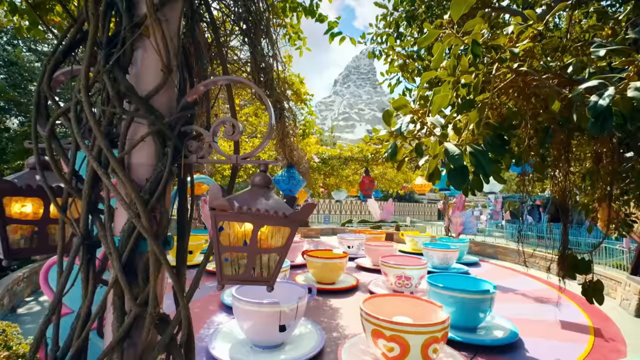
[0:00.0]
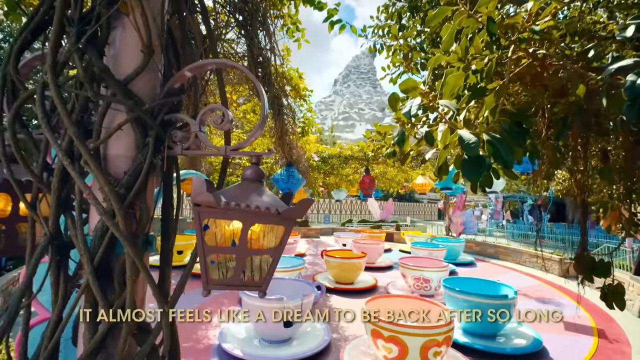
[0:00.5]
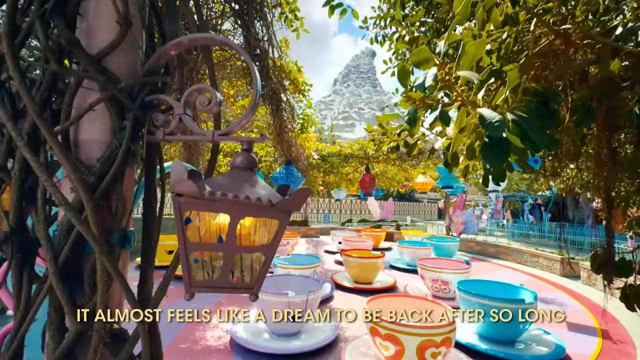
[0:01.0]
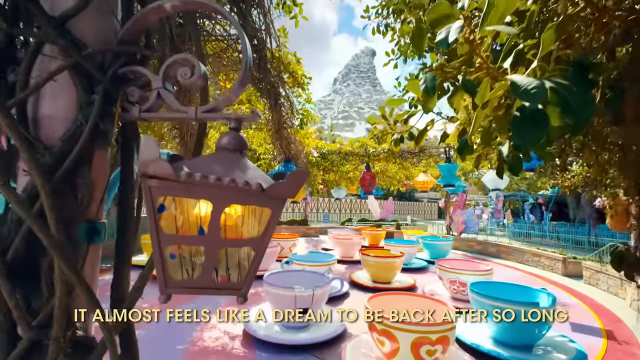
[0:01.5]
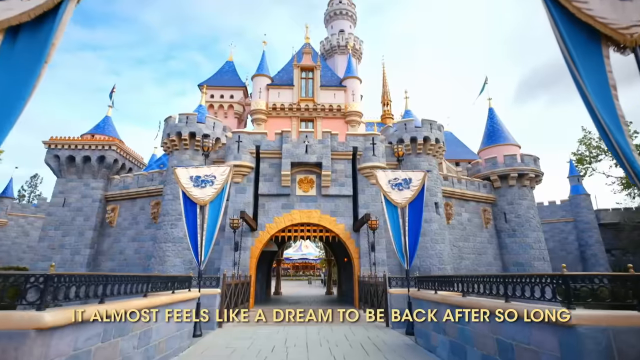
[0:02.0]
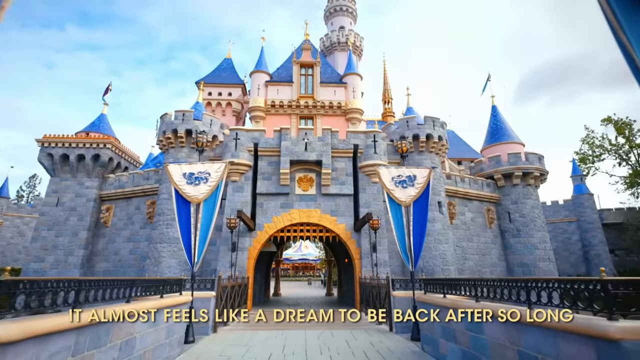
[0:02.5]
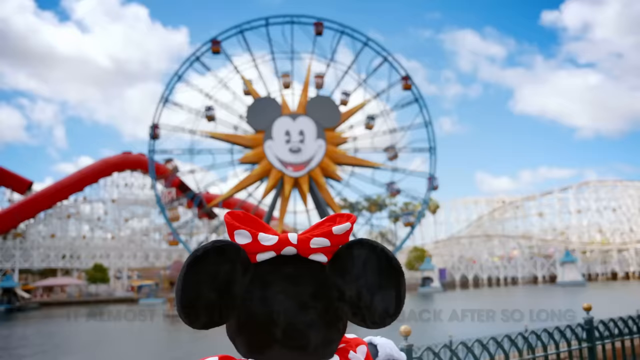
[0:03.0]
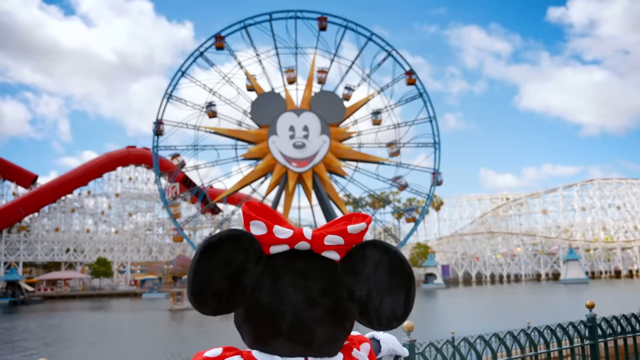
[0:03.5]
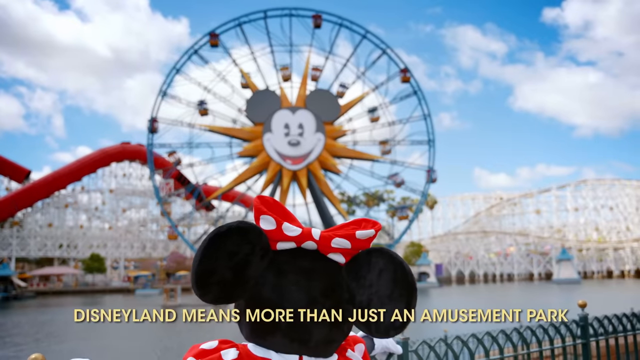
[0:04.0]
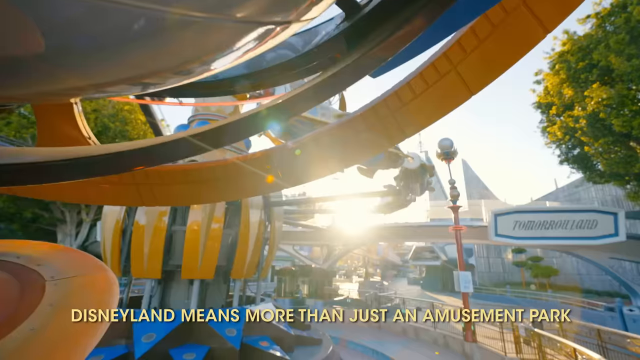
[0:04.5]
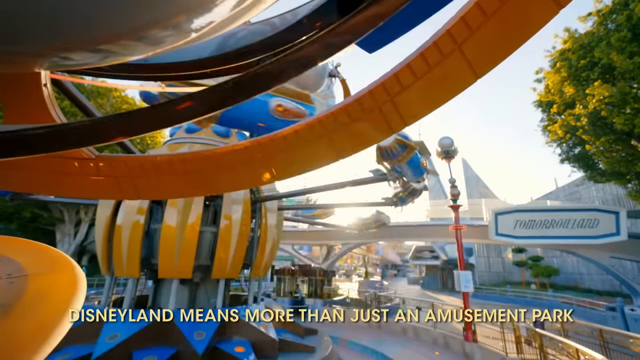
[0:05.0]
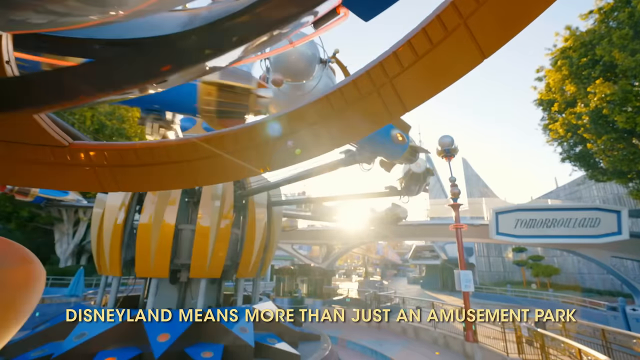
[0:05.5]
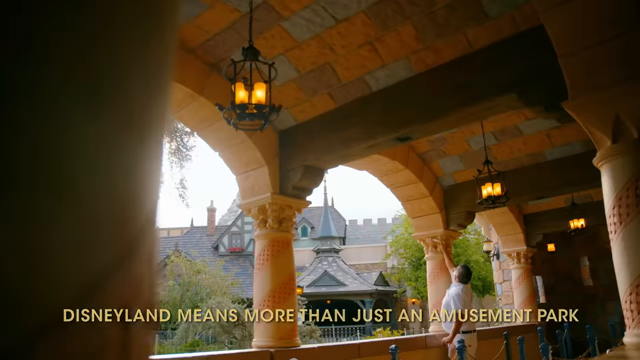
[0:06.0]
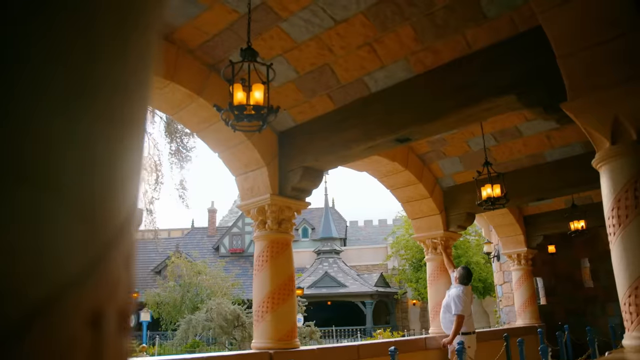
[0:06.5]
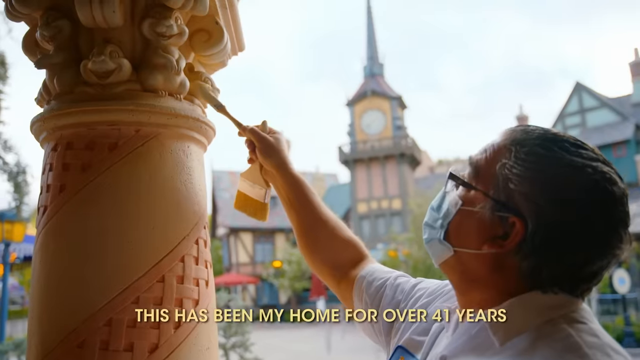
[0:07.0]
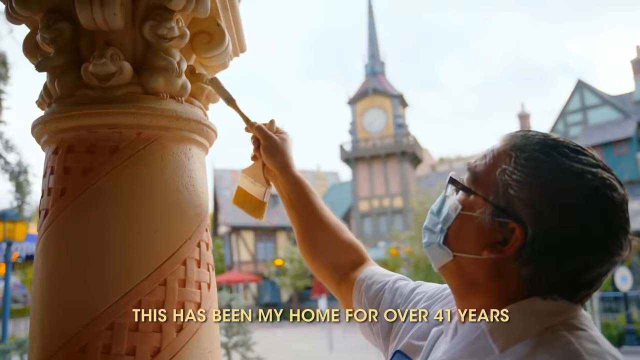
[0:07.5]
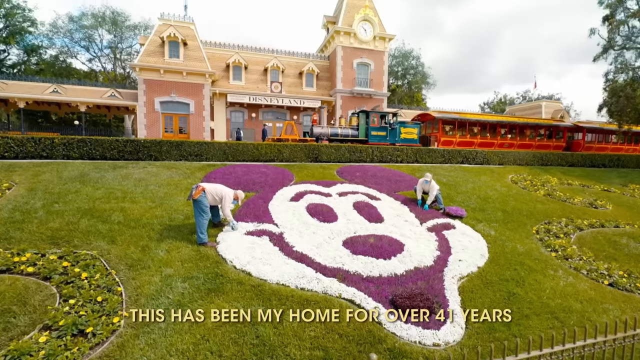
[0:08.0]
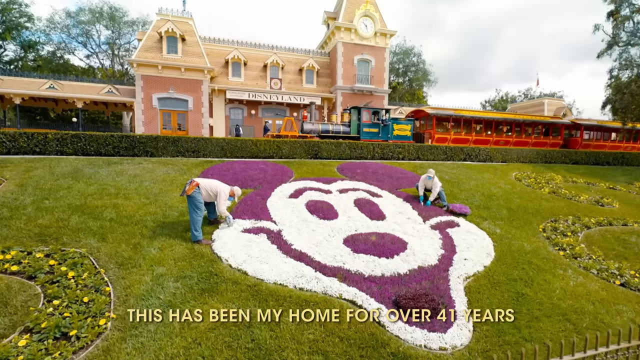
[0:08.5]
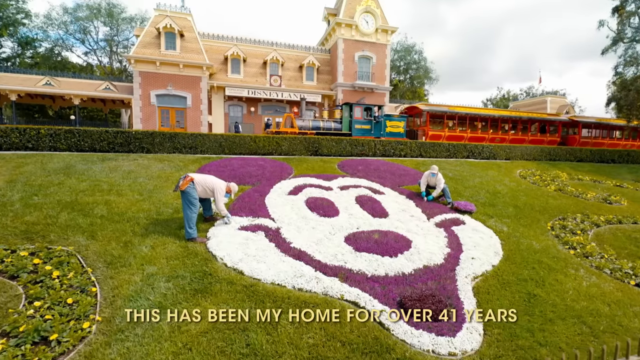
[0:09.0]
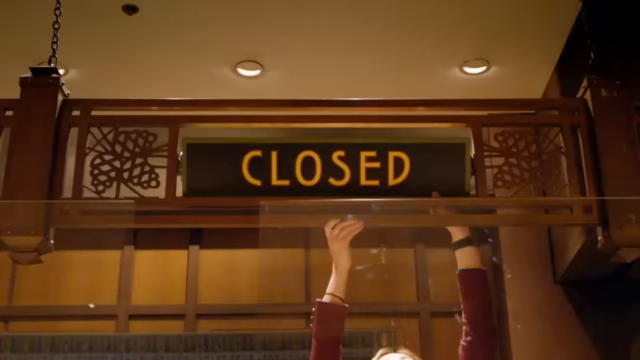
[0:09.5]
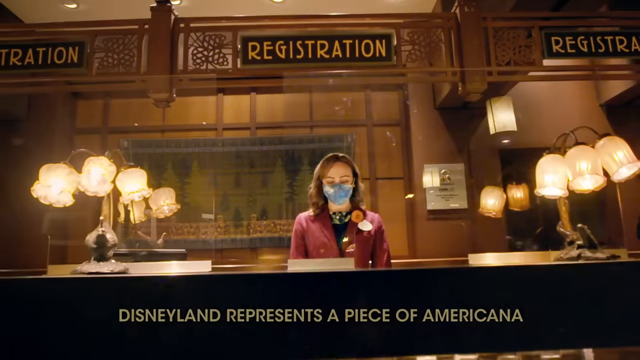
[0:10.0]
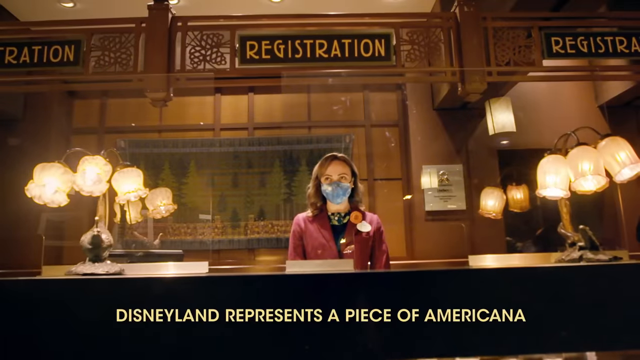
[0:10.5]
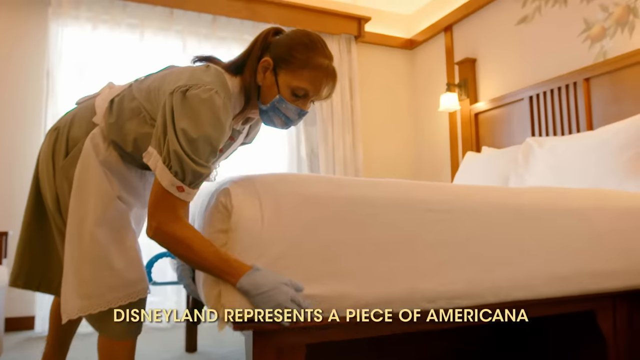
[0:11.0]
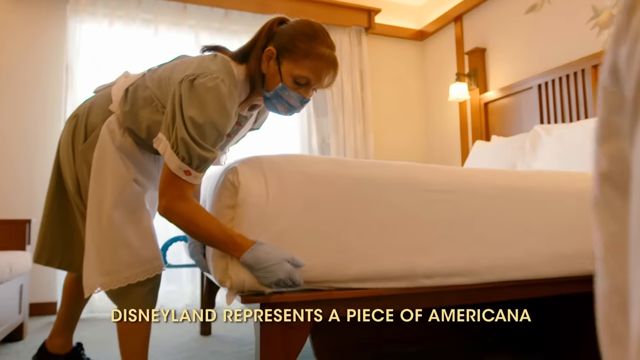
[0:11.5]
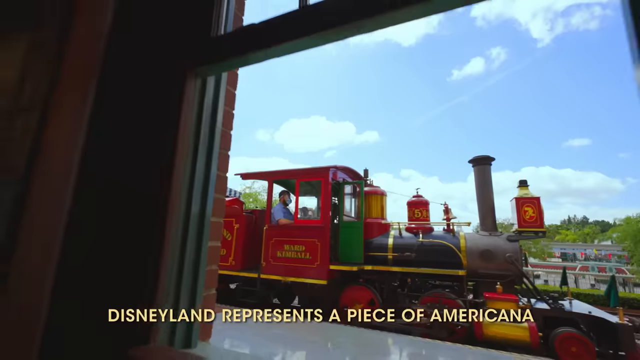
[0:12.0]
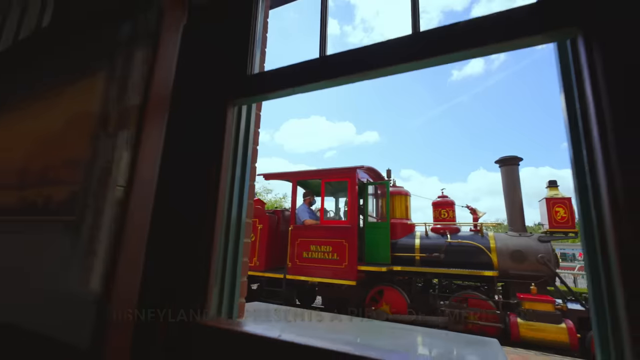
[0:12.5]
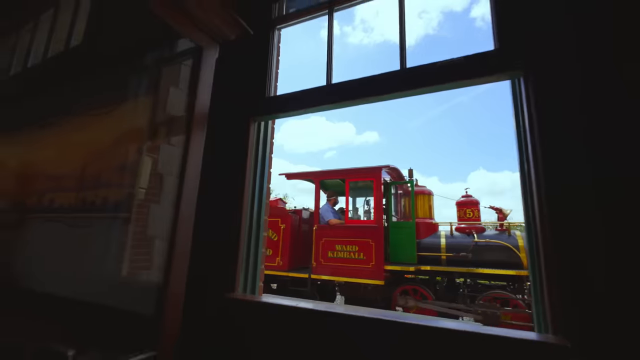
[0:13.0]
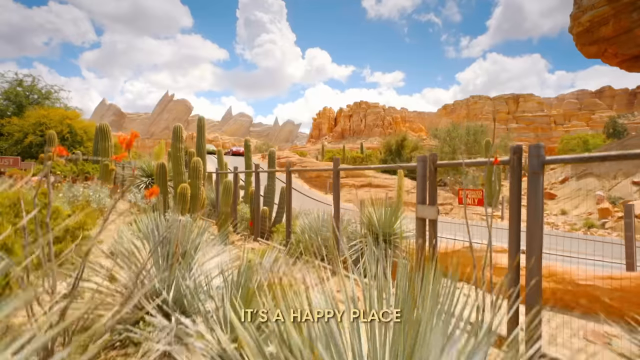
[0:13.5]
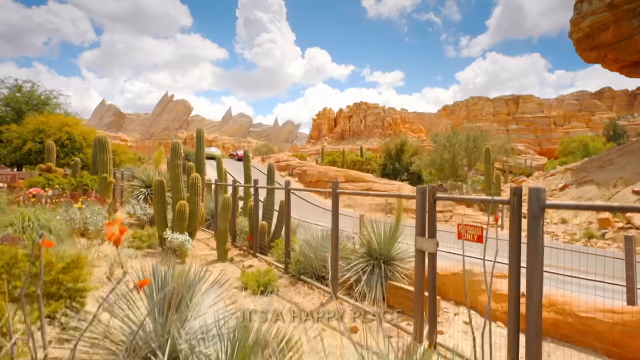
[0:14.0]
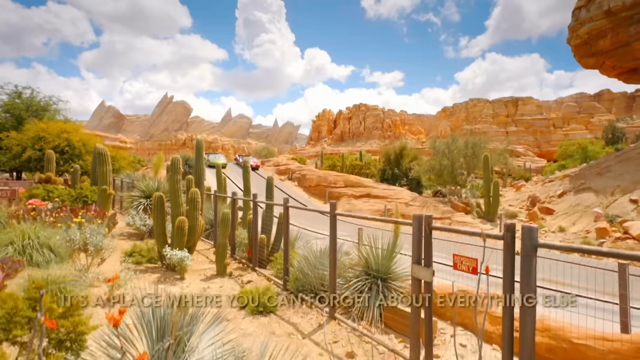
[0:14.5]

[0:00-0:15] The video opens with what clearly looks like a montage of clips and pictures of Disneyland. Yellow text at the bottom of the screen reads "Disneyland means more than just a nearby park." Various parts of the park are shown in an idyllic setting that is not crowded, with few people around. It starts with the teacup ride, a kind of bumper-car-style ride, slowly going around with the teacups empty; it looks like the park may be preparing for opening. The camera then zooms in on a sort of house, apparently the castle that is the mainstay of the amusement park. Different parts of the park follow: a Ferris wheel that a Minnie Mouse character is looking at, a rocket ship ride, a column being painted, and manicured grass with Mickey Mouse's face in it. Housekeepers wearing masks make a bed, apparently preparing a hotel room. A train of sorts goes by, and the front office of the hotel is switching something over.